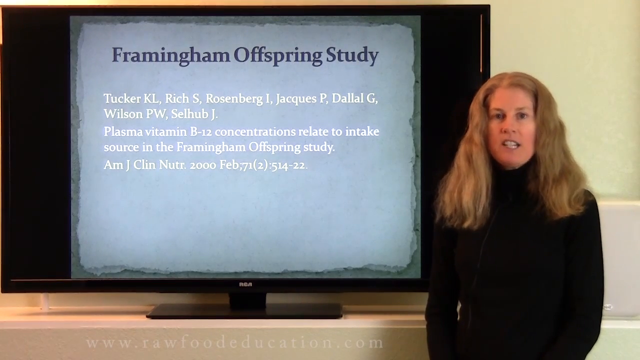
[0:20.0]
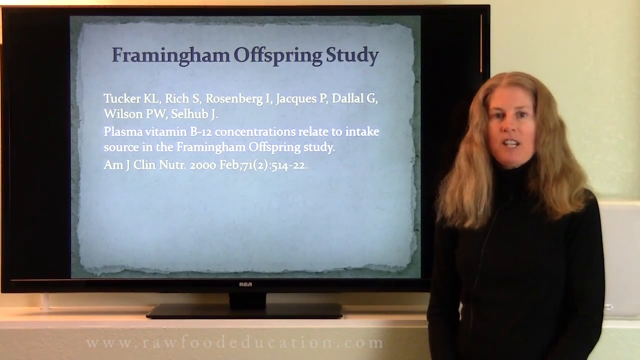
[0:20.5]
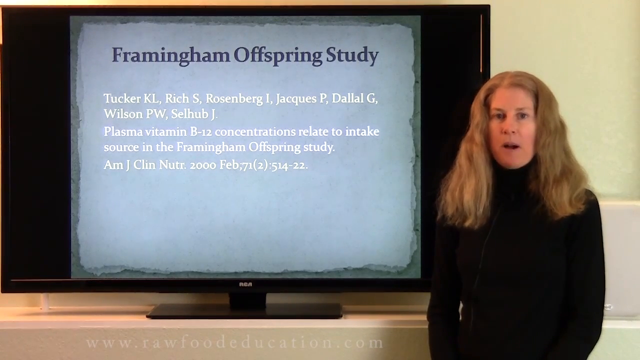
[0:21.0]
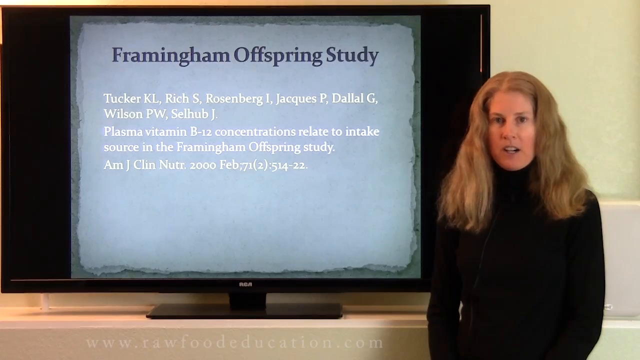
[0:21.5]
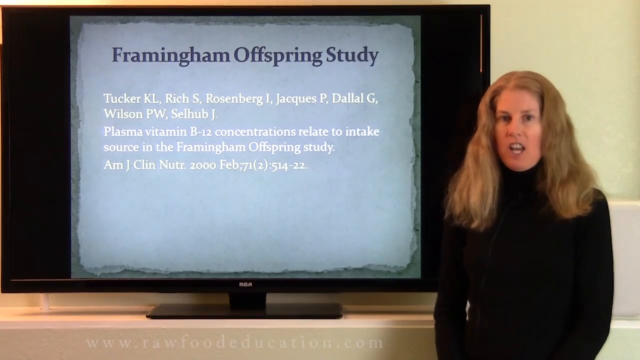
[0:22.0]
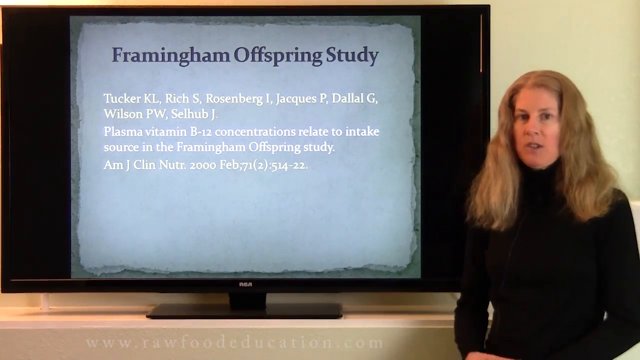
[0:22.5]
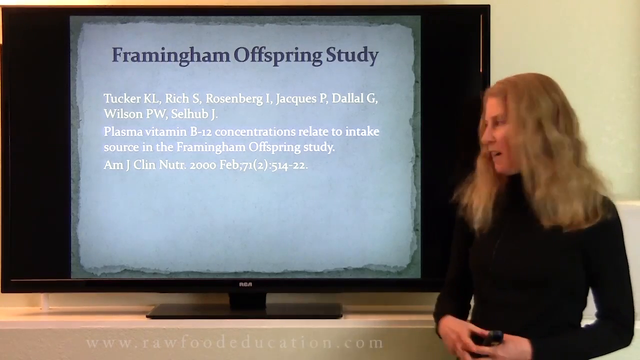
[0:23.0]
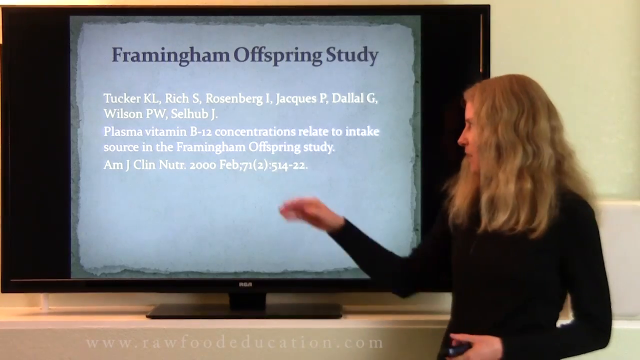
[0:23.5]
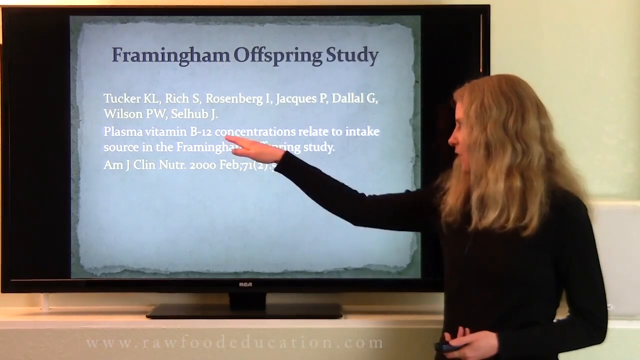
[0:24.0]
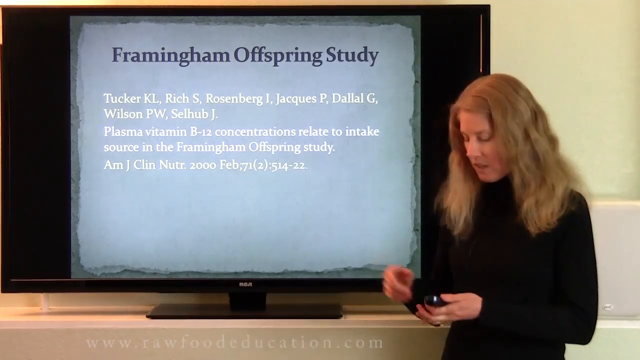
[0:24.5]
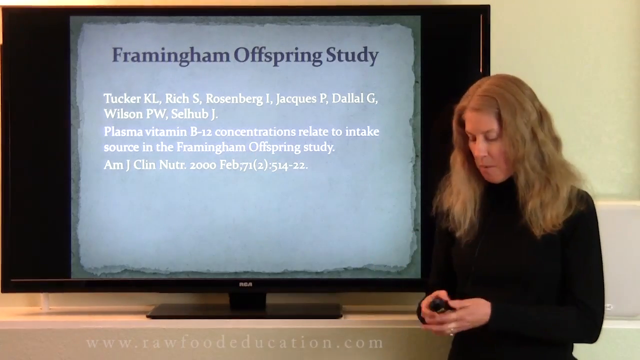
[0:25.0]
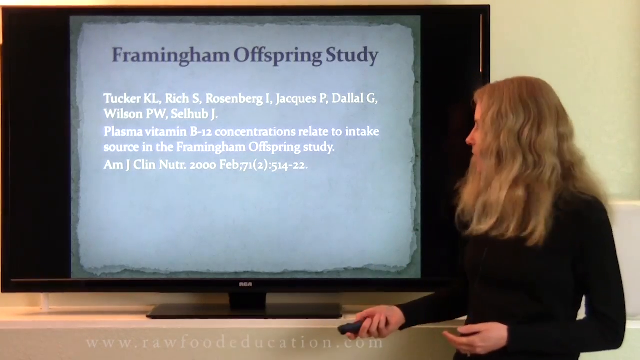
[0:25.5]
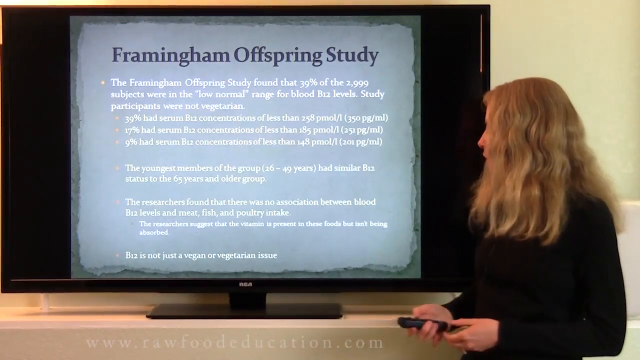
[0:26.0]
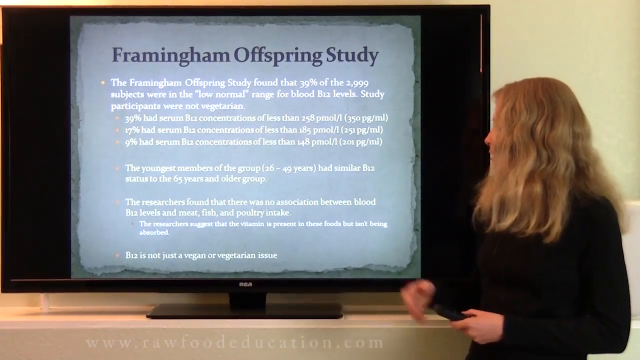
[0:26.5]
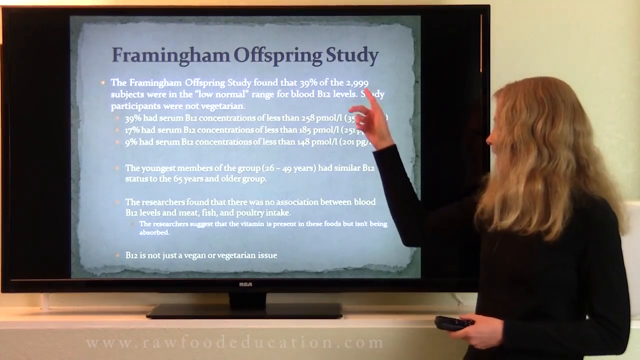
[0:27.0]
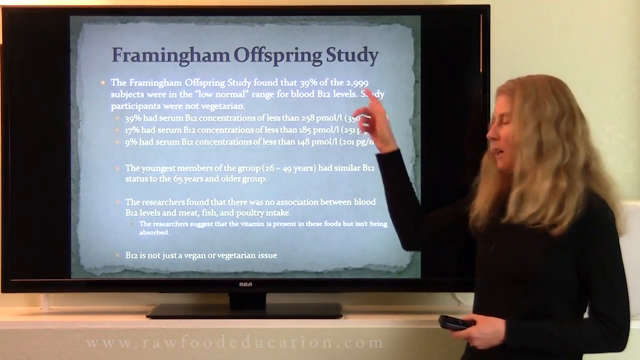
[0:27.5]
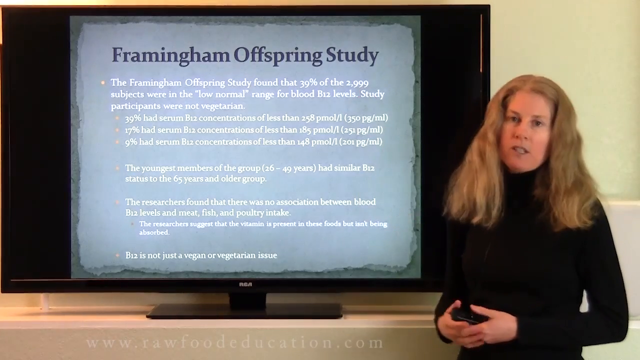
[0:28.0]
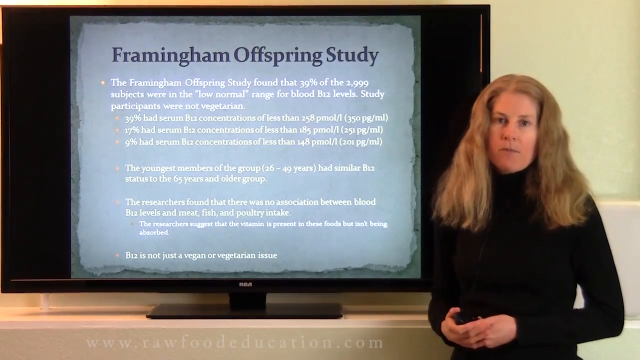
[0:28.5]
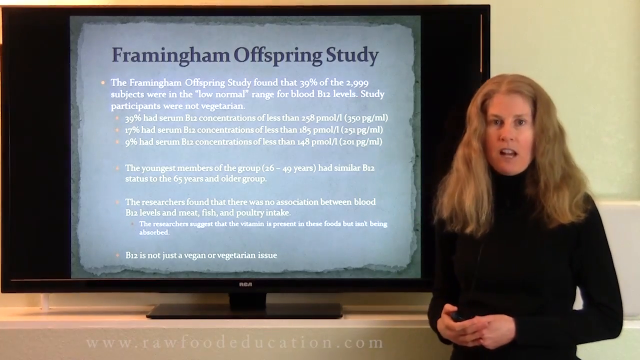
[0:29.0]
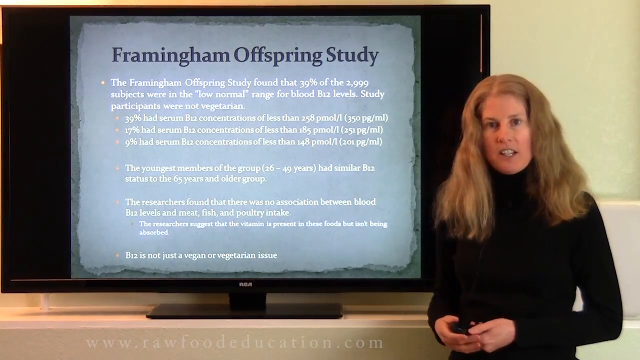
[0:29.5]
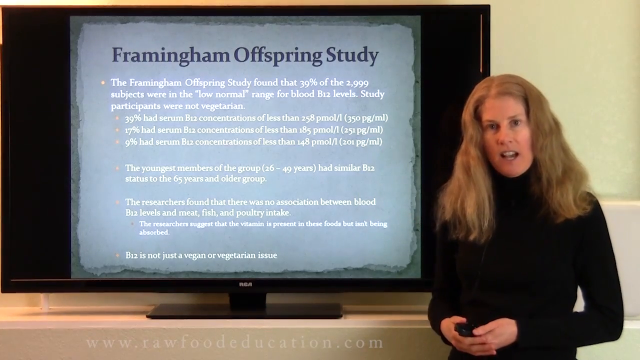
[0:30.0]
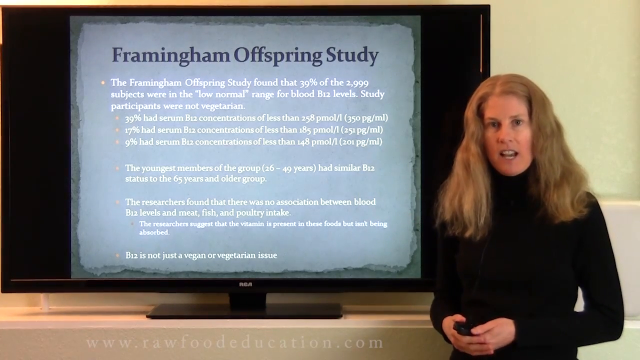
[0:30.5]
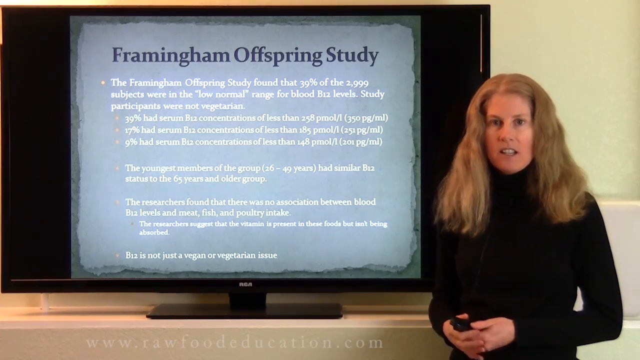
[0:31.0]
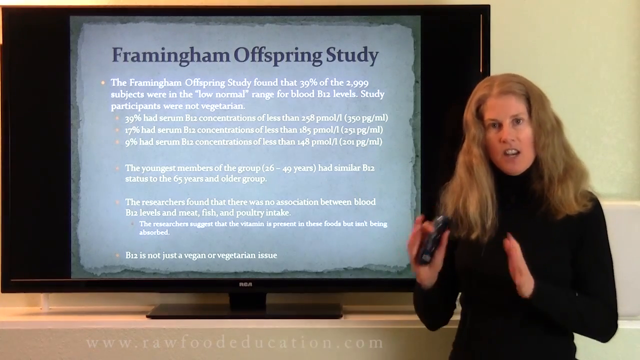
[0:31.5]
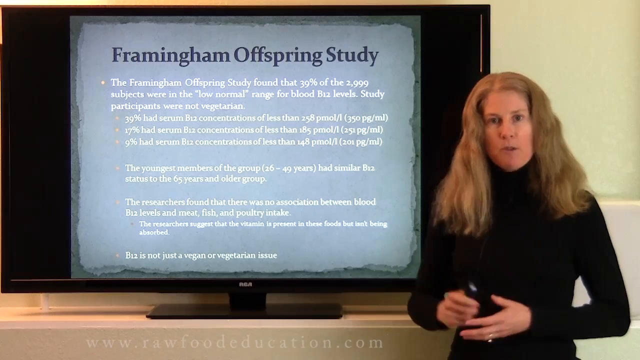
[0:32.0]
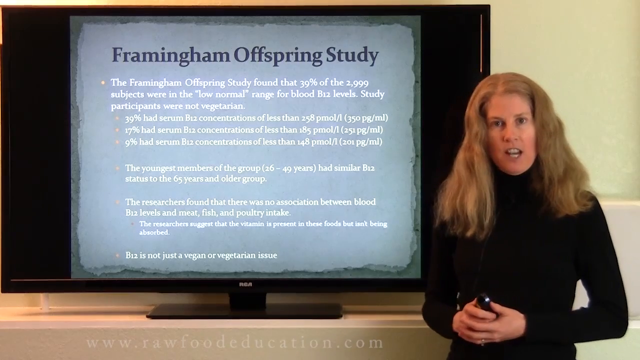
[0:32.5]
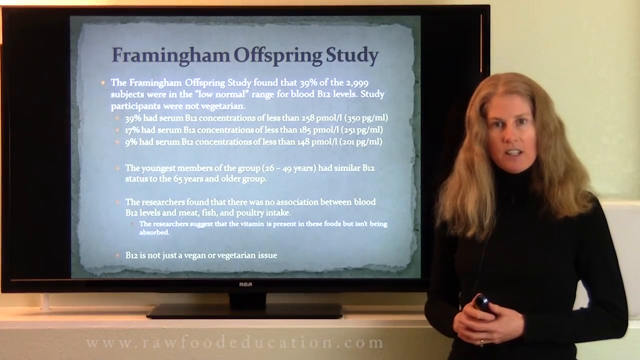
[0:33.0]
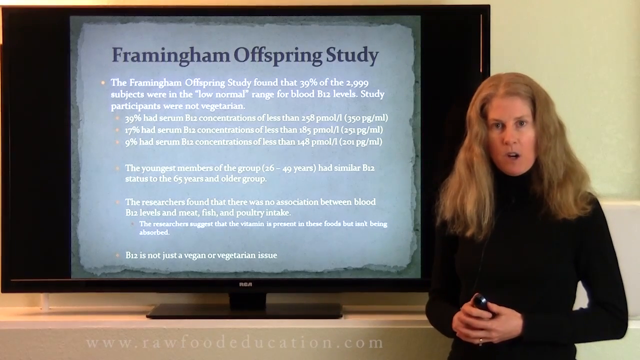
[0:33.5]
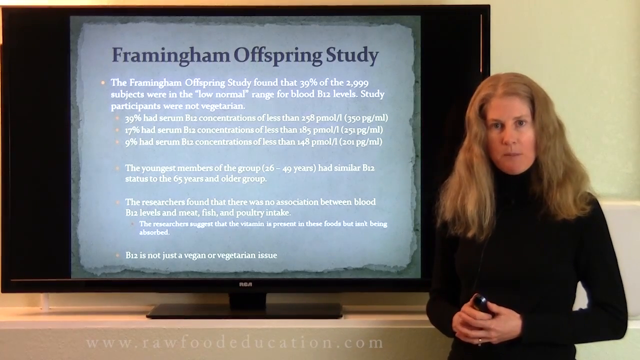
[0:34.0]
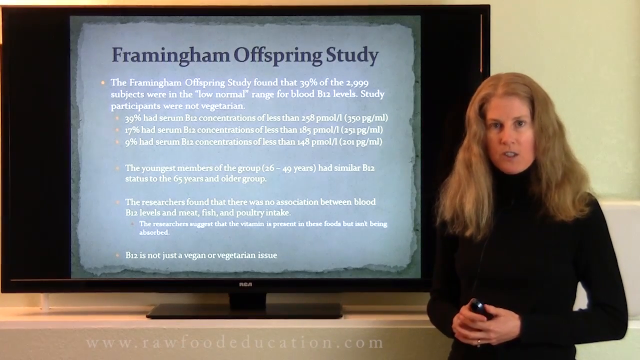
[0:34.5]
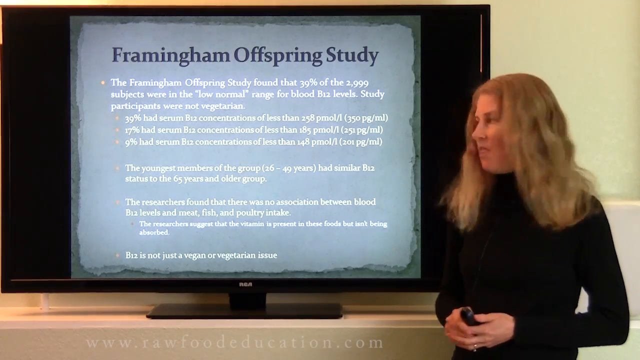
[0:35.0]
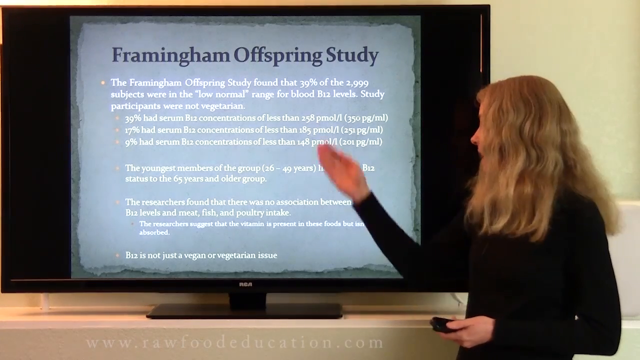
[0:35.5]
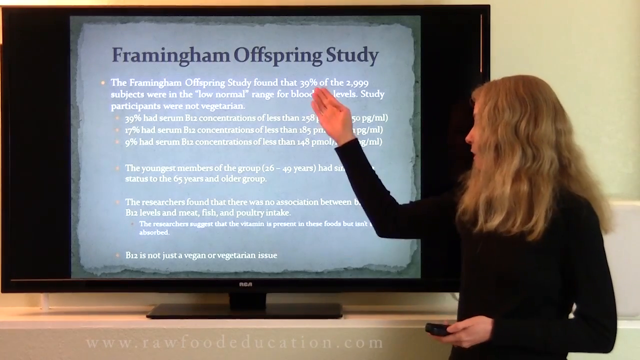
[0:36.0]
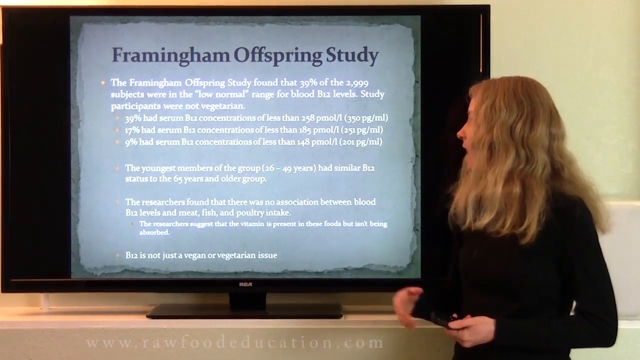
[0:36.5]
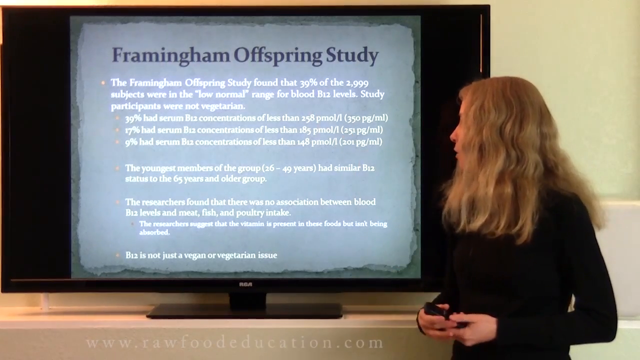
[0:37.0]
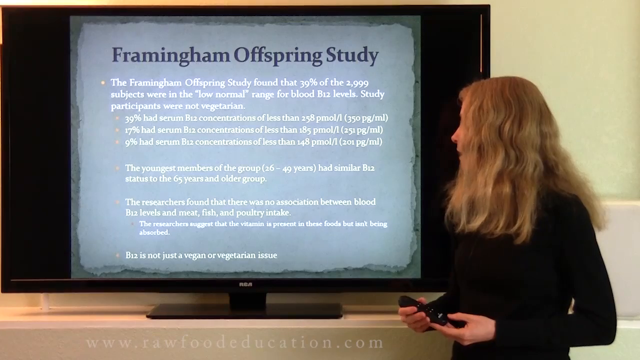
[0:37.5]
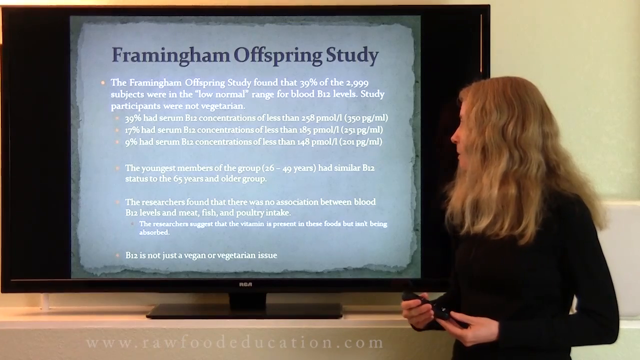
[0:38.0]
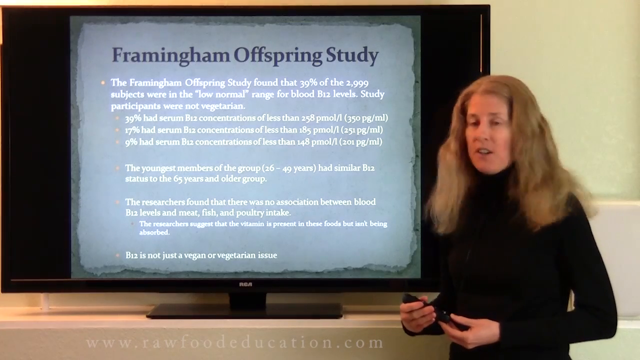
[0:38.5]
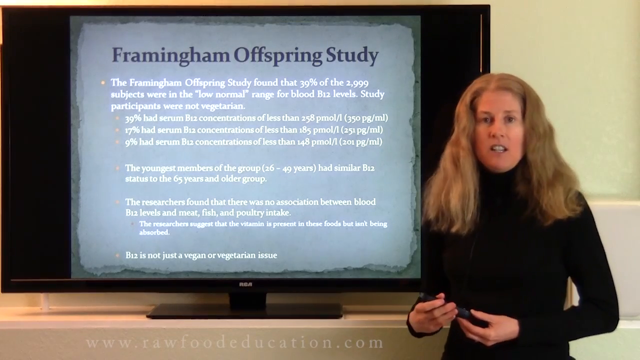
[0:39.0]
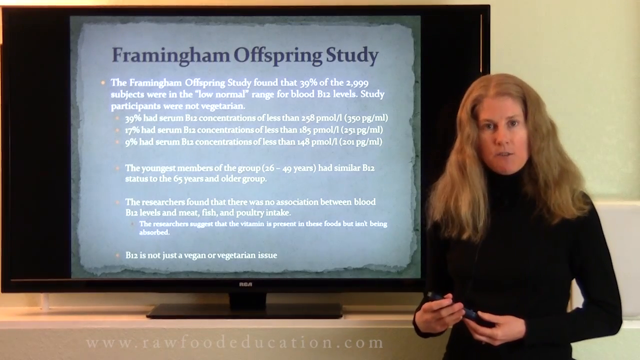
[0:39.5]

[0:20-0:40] The woman with medium-length blonde hair, probably around 40, in a black sort of sweater, continues talking. A kind of informational screen with a kind of blue background and white text shows information on "plasma vitamin b12 concentrations relate to intake source of Framingham offspring study". It then changes to another screen, and she points at information on the screen behind her, which states "the Framingham offspring study found that 39 of the 4,000 subjects were in the low normal range for blood", along with more text about the Framingham study.